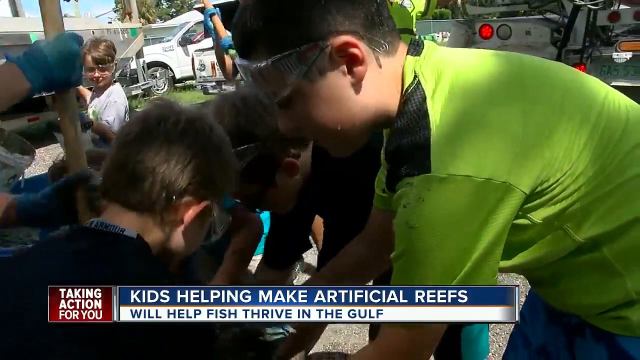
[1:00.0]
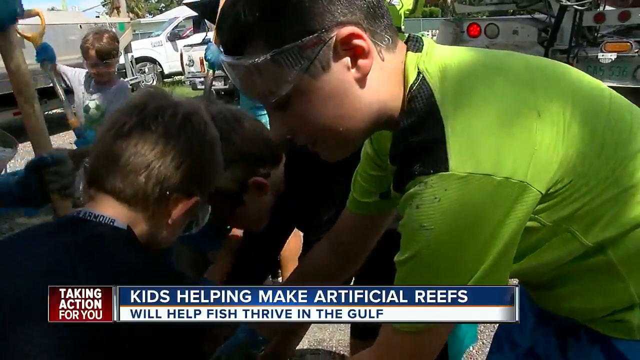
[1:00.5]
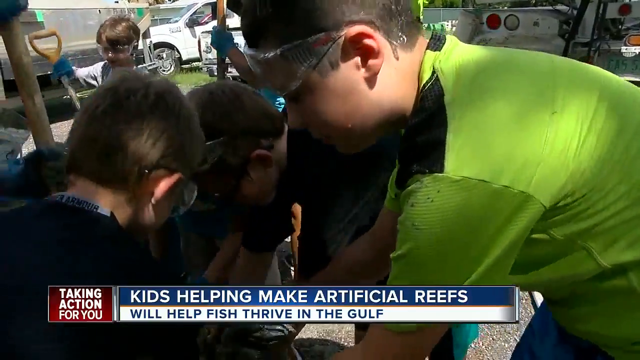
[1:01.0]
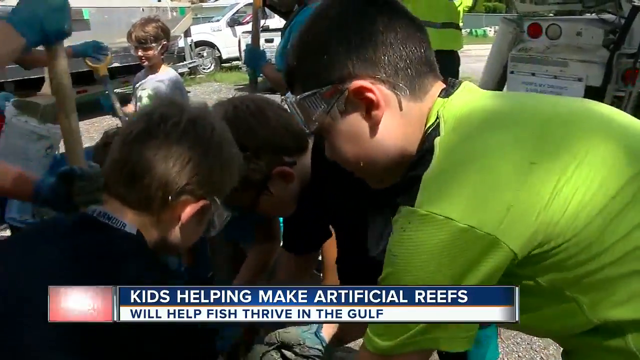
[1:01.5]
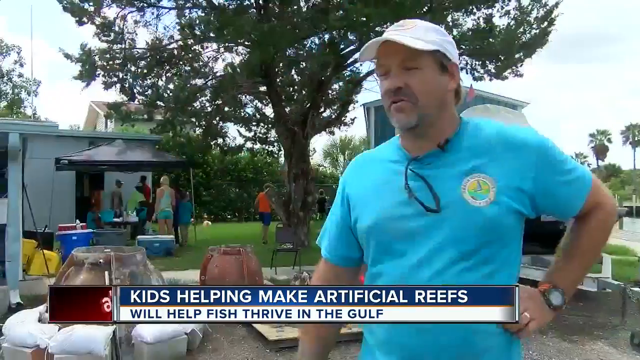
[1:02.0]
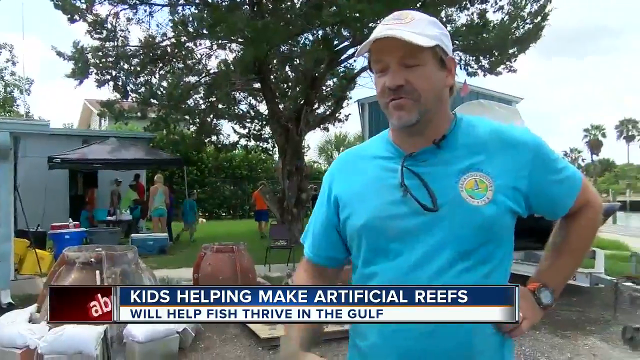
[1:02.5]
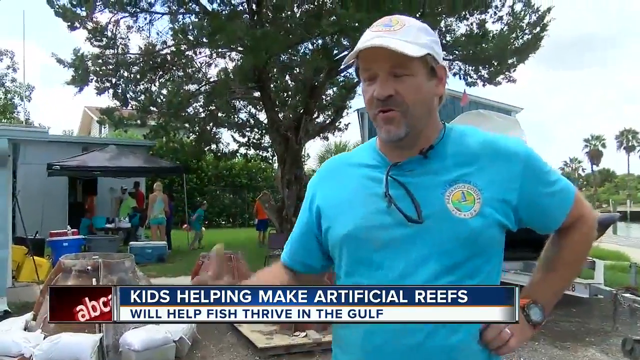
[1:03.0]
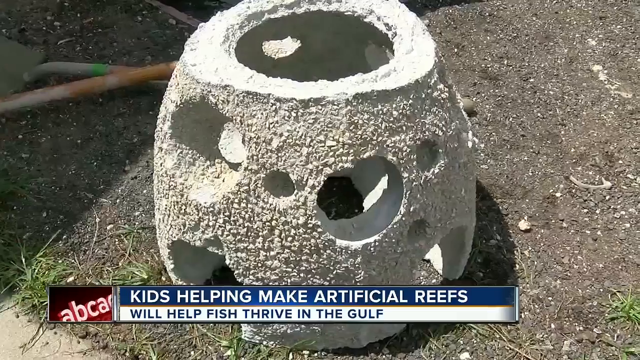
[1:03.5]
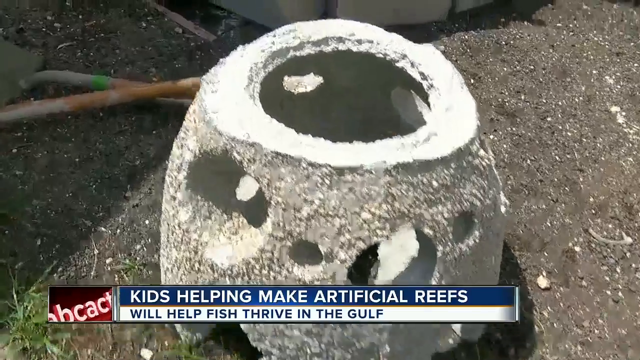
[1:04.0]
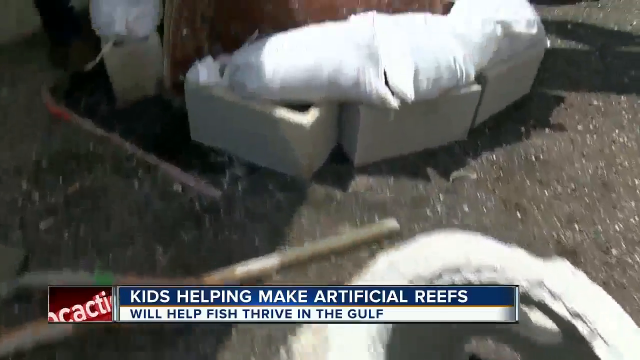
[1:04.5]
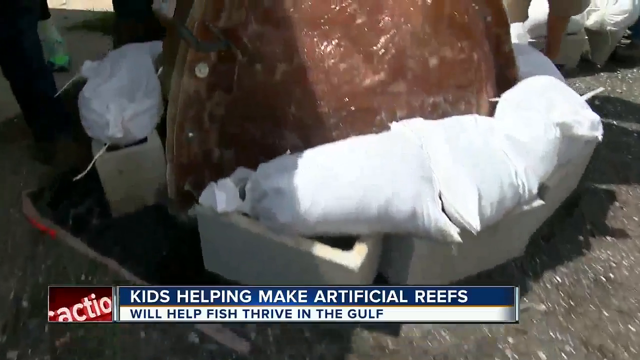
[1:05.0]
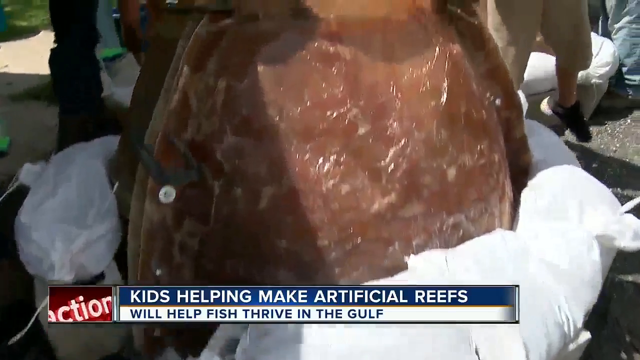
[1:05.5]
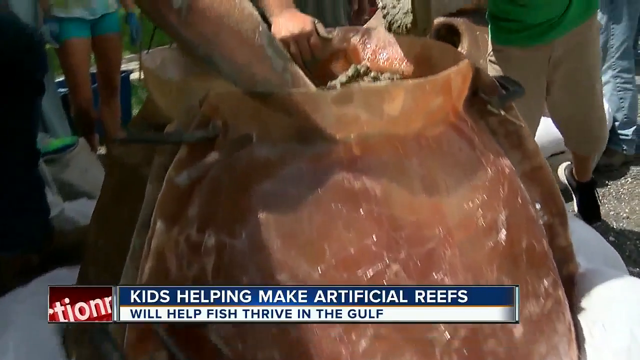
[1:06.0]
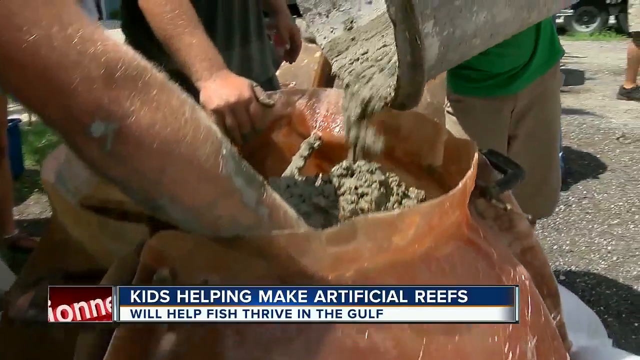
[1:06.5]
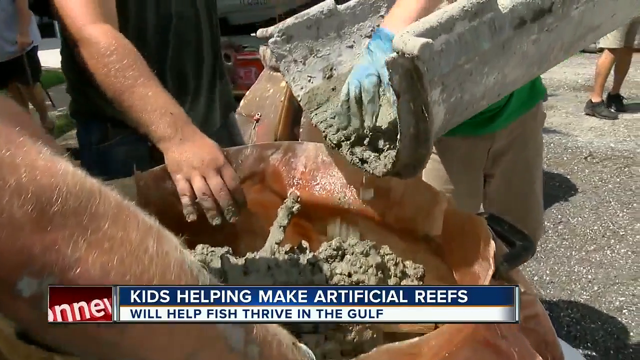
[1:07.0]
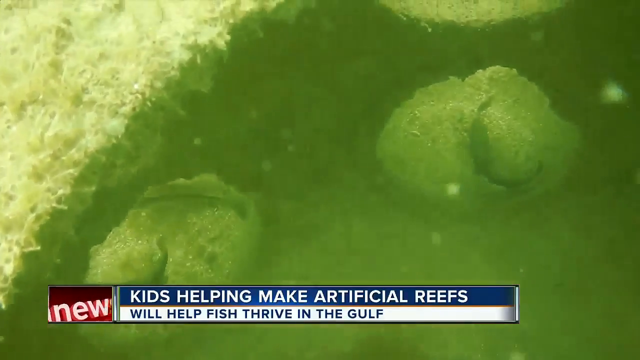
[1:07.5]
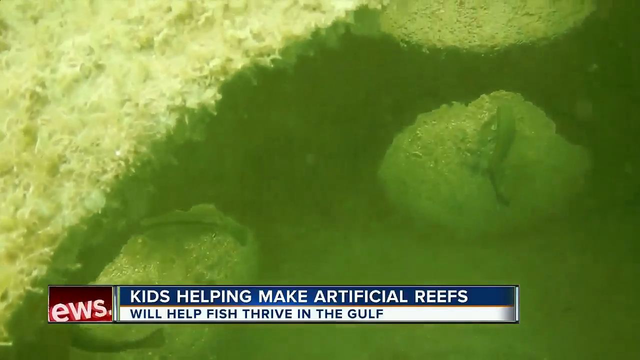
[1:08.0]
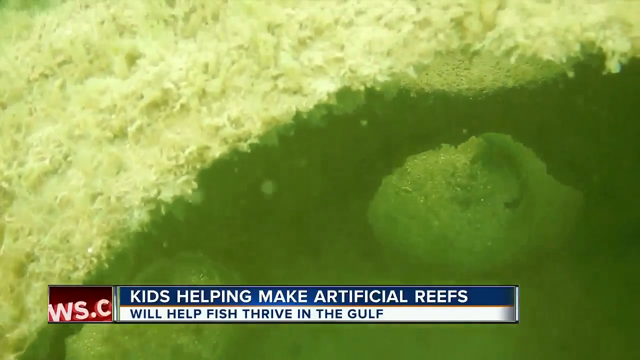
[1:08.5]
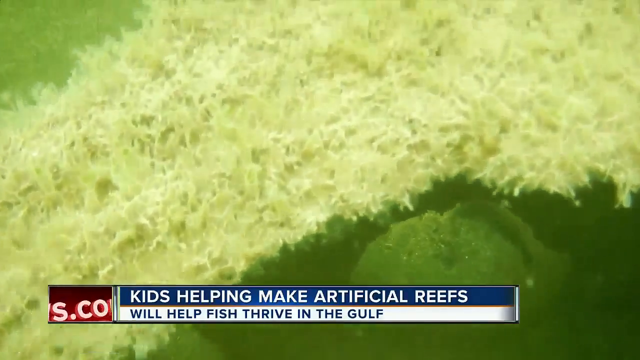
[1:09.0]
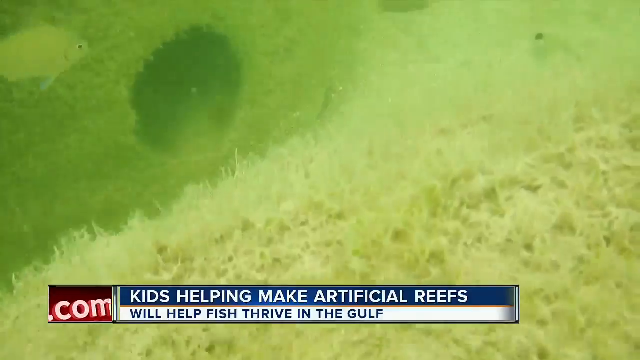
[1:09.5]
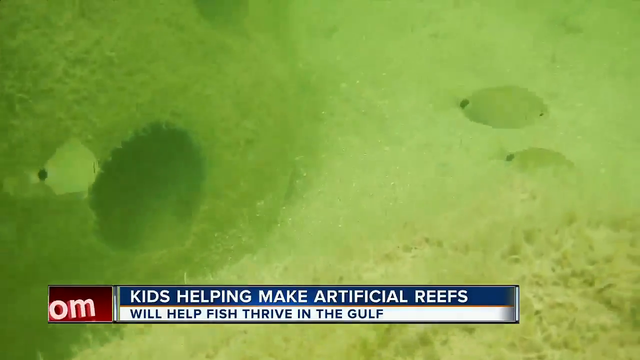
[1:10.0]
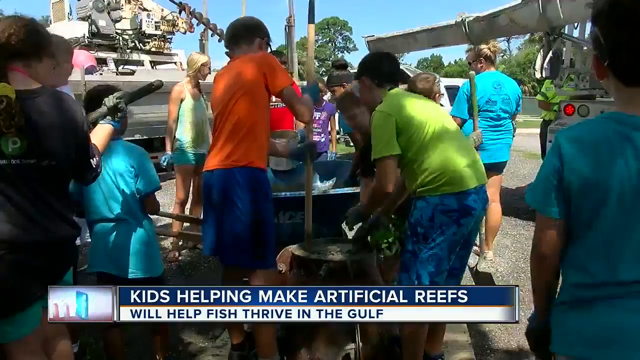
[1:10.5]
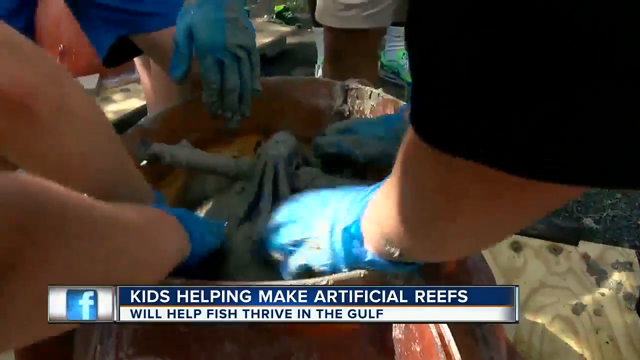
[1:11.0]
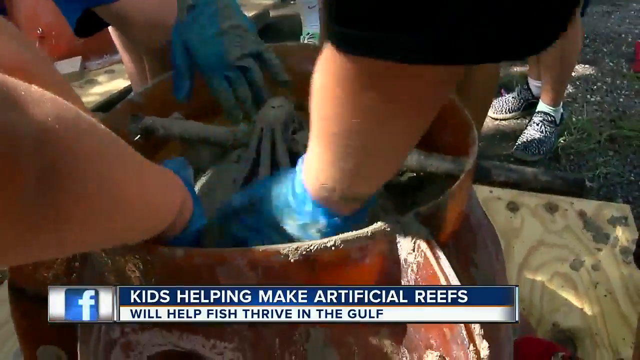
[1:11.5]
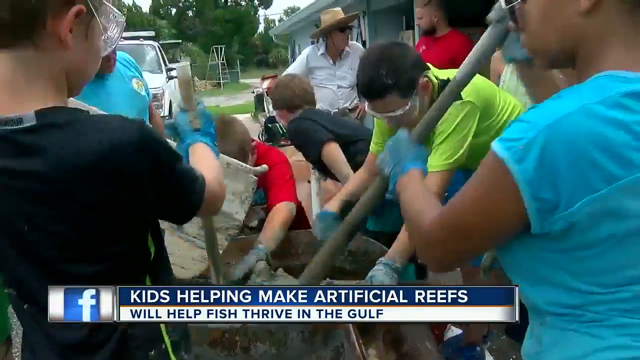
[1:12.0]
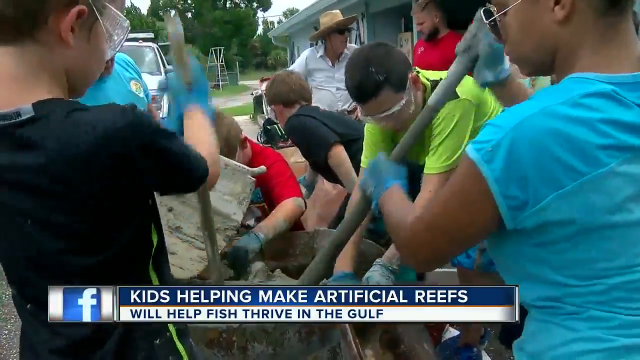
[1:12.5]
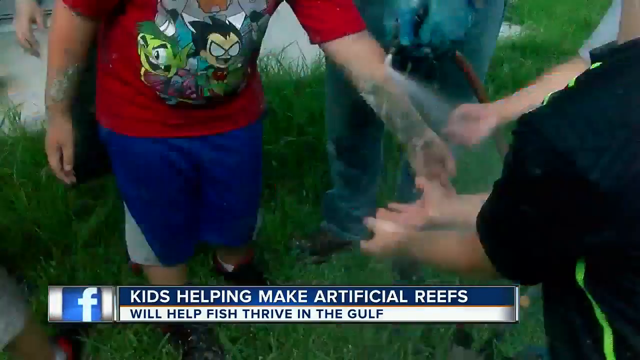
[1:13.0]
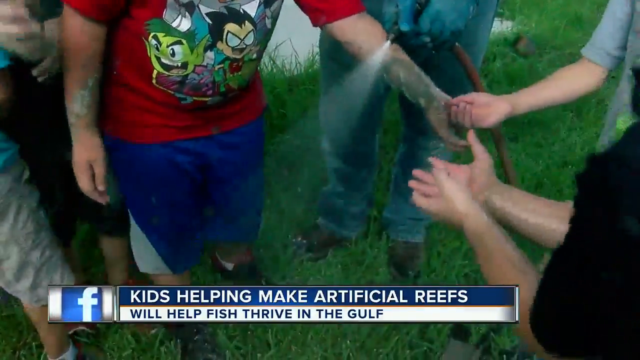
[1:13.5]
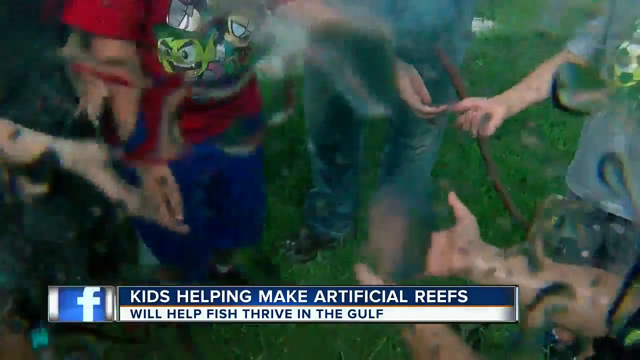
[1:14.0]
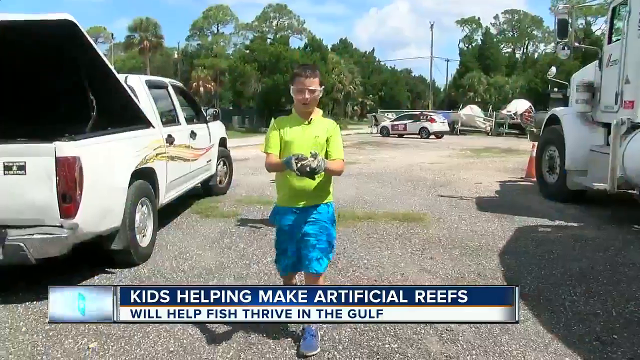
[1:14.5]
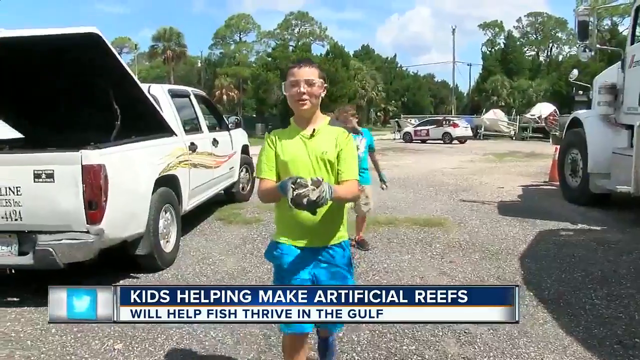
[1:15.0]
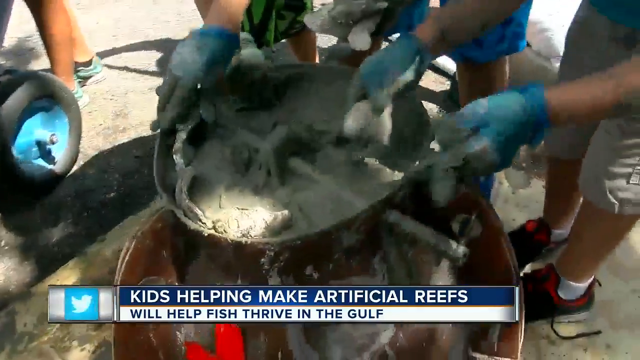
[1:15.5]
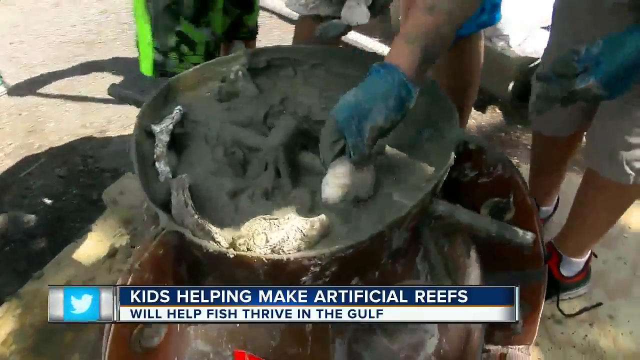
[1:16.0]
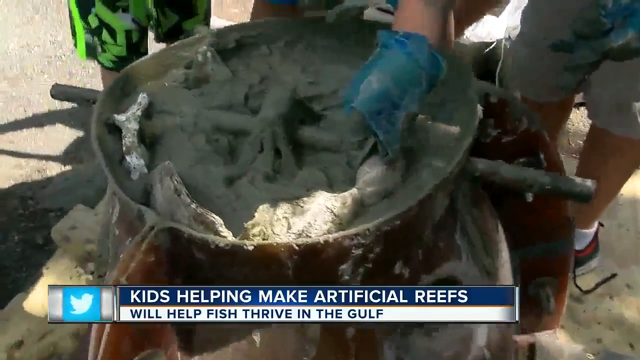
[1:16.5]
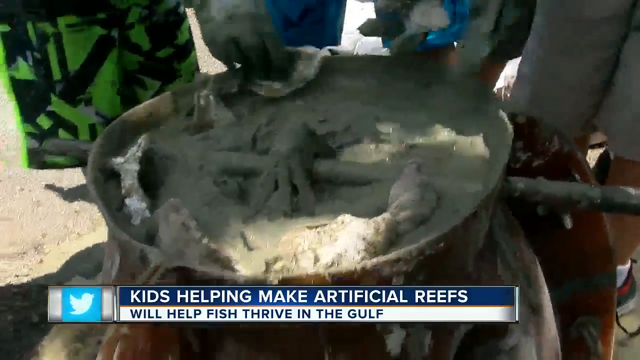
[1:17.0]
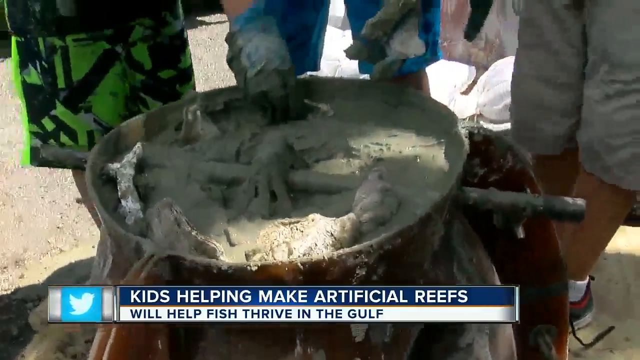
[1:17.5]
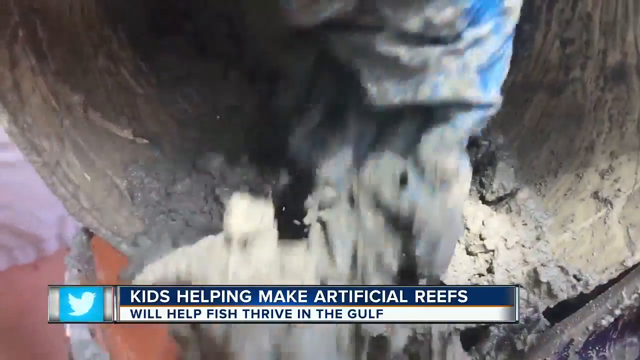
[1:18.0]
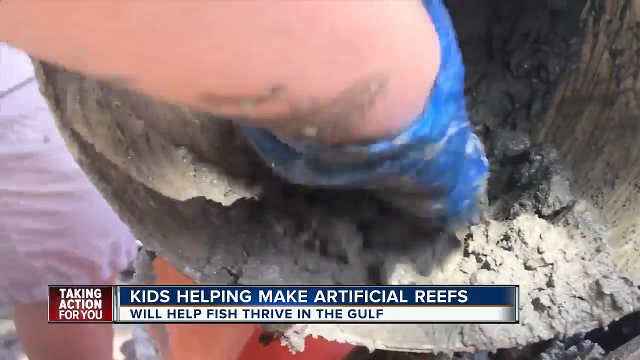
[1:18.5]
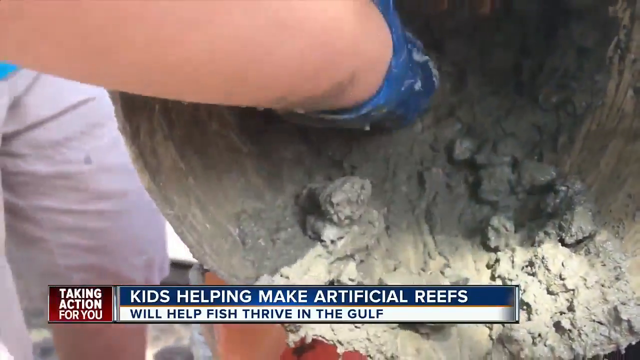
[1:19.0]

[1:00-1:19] The video transitions to four split screens showing several instances of the coral reefs being made. In the first, top square, three children appear to be near the concrete truck, near an artificial reef on the far right. A worker in a neon green shirt makes sure the concrete is poured into what appears to be a large plastic pool. On the bottom left, several children together pat down buckets and artificial reefs with concrete. The fourth screen shows what appears to be children working together separating concrete on one particular coral reef. Next, children use sticks to spread the concrete evenly within the coral reef because of pockets of air, patting down the gray liquid rock. The scene then transitions to what appears to be a dock, where a crane is used to drop the coral reefs. Three workers wear white helmets and what appear to be life vests, and they place down several of the artificial coral reefs.